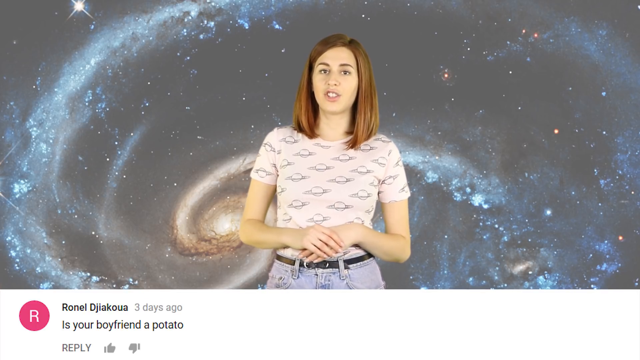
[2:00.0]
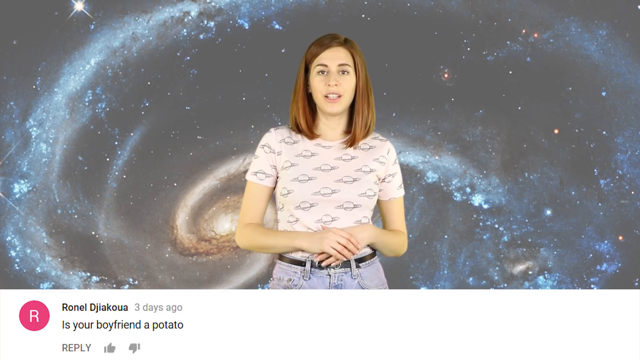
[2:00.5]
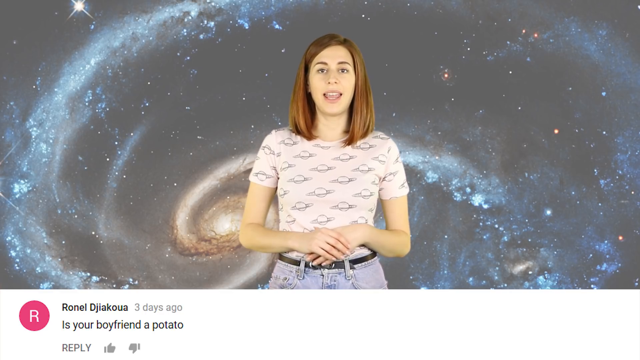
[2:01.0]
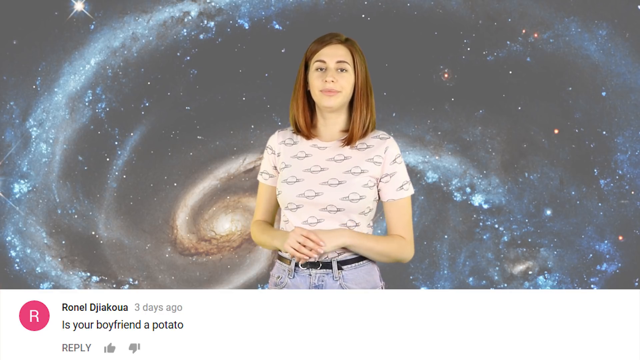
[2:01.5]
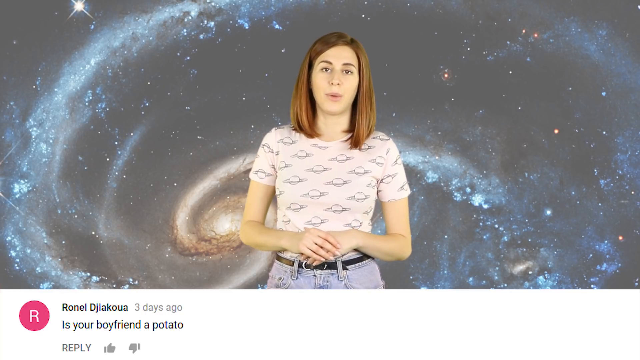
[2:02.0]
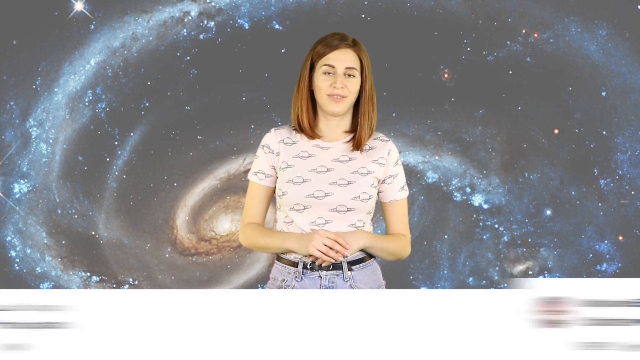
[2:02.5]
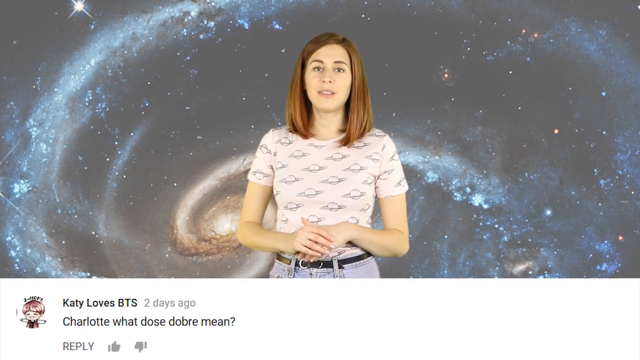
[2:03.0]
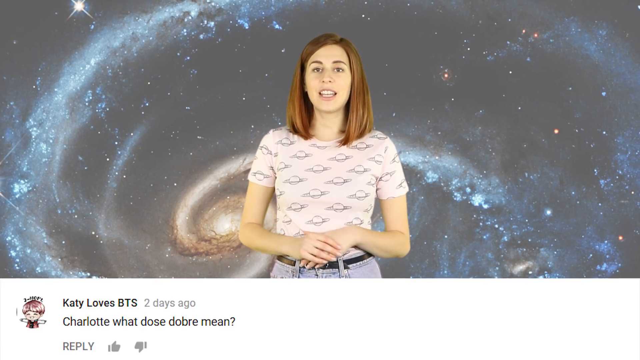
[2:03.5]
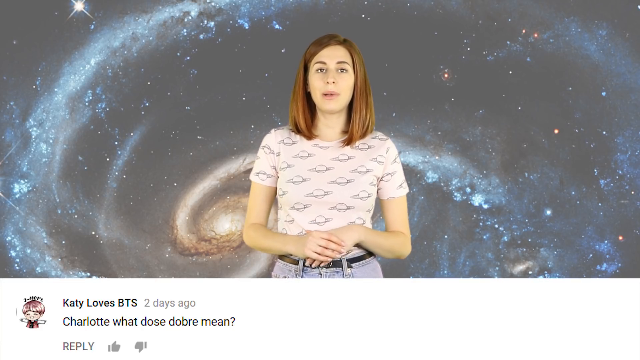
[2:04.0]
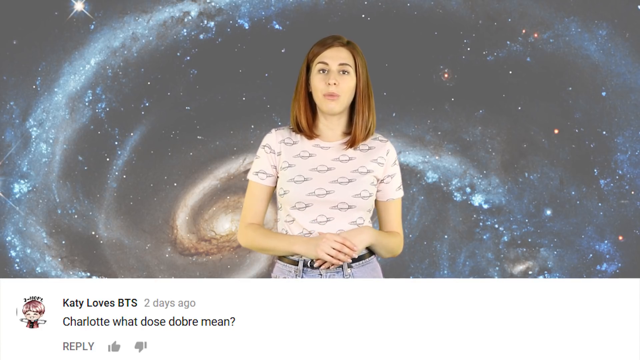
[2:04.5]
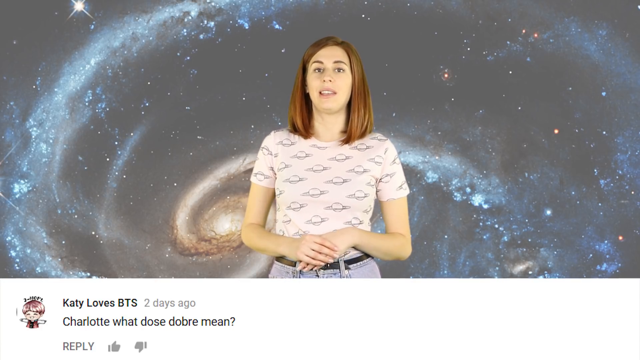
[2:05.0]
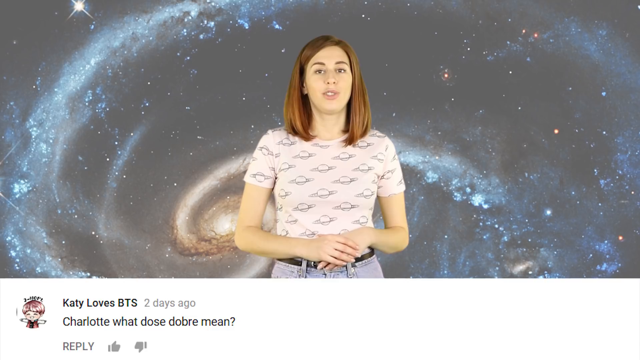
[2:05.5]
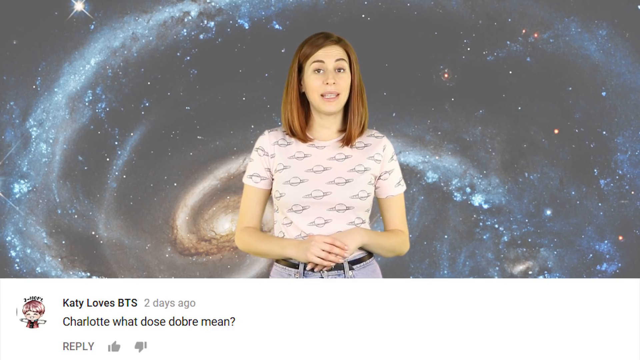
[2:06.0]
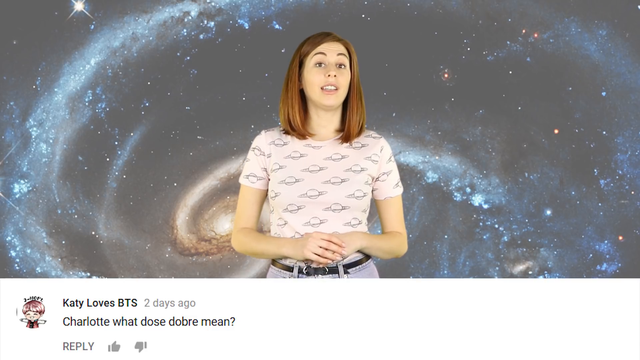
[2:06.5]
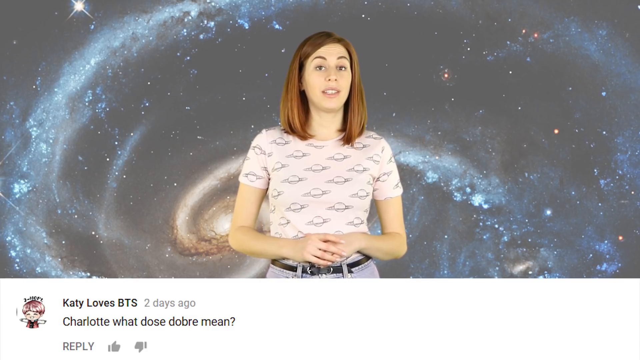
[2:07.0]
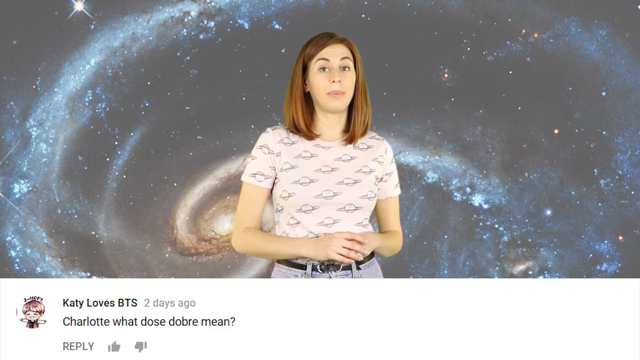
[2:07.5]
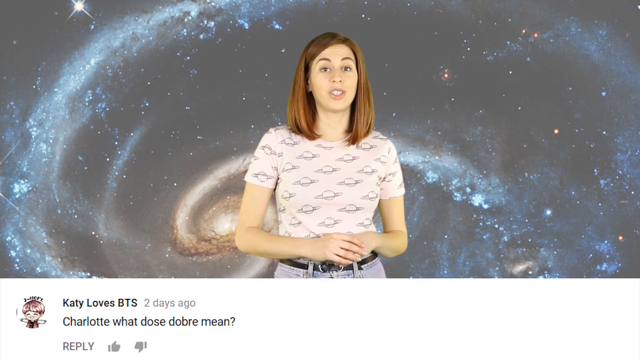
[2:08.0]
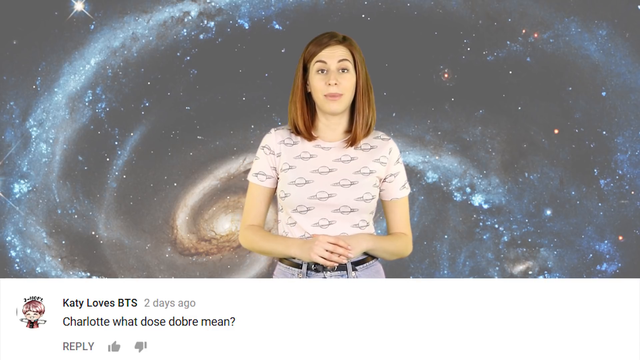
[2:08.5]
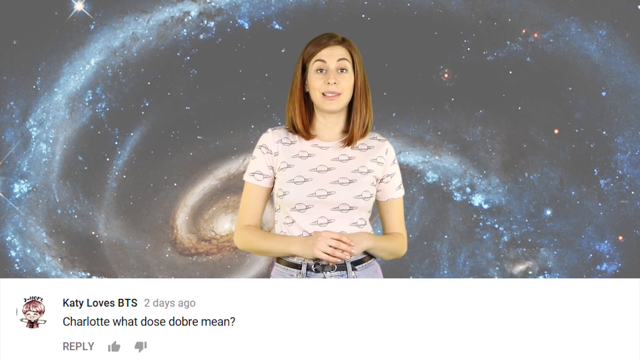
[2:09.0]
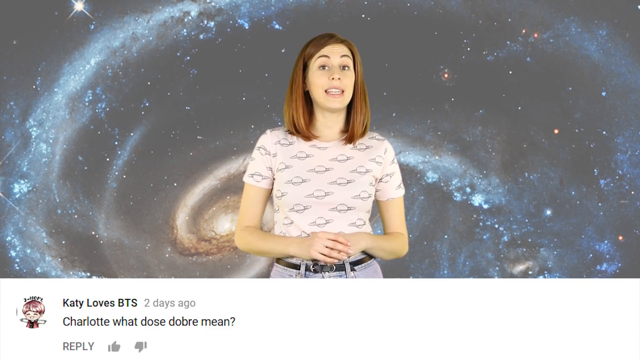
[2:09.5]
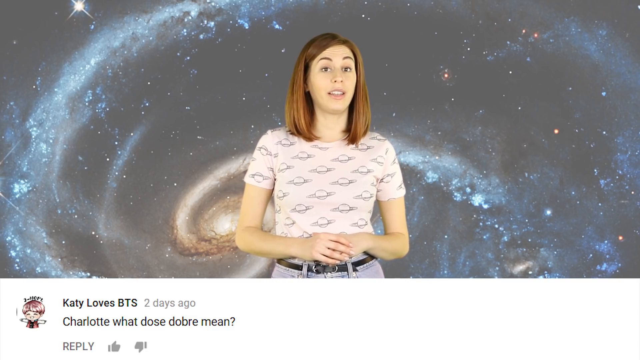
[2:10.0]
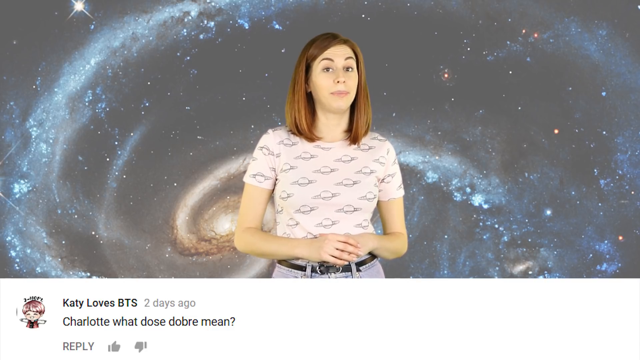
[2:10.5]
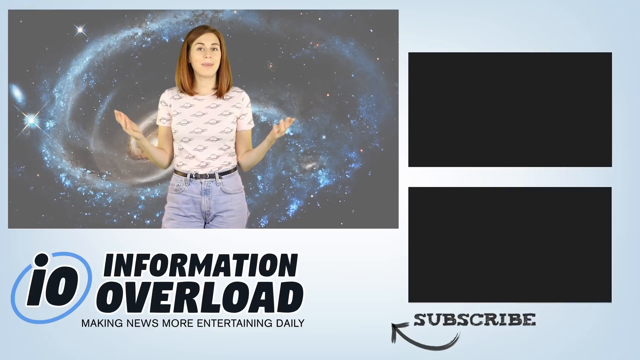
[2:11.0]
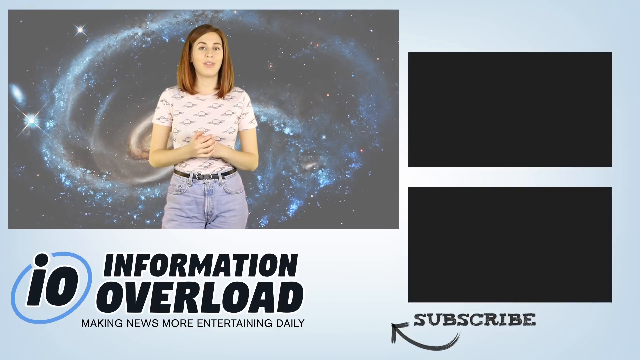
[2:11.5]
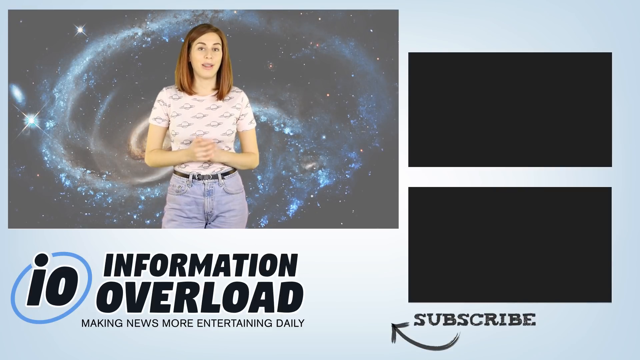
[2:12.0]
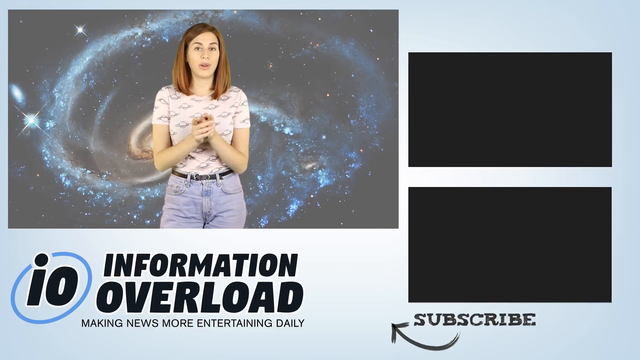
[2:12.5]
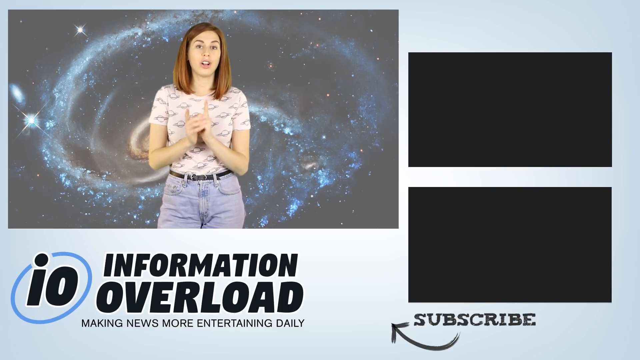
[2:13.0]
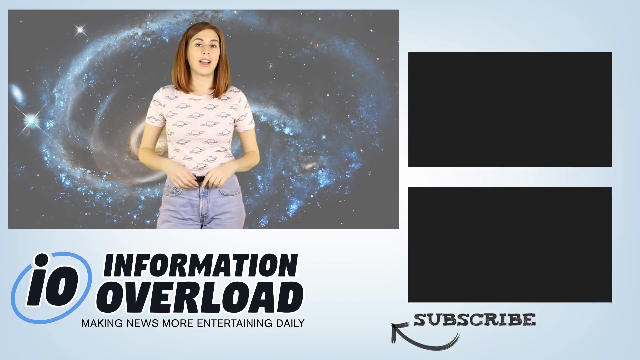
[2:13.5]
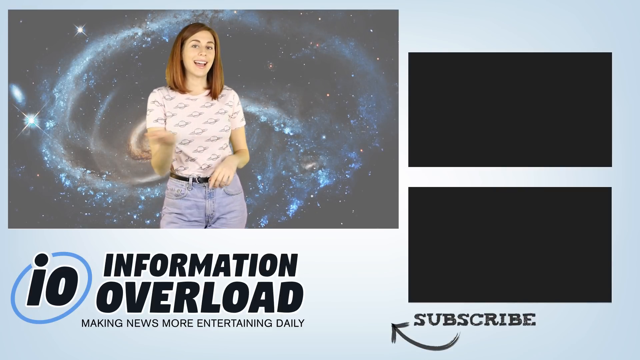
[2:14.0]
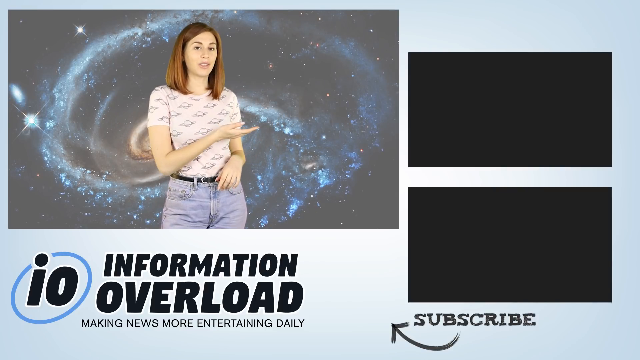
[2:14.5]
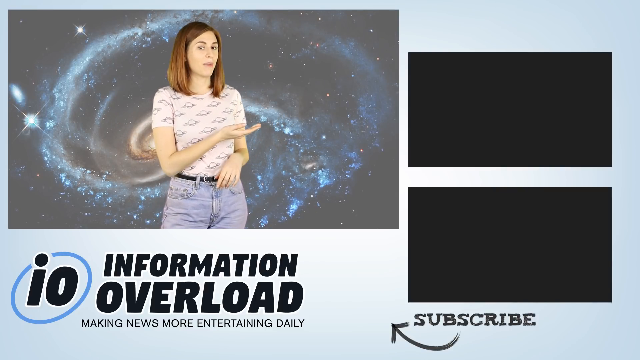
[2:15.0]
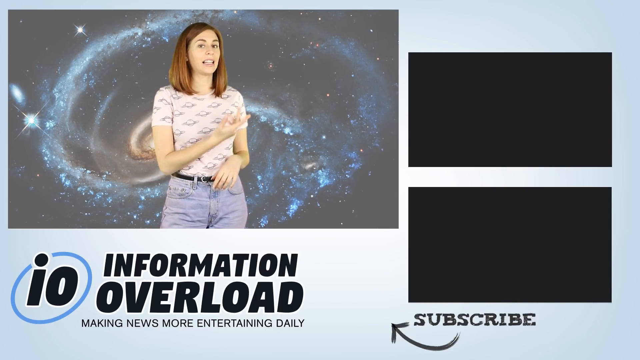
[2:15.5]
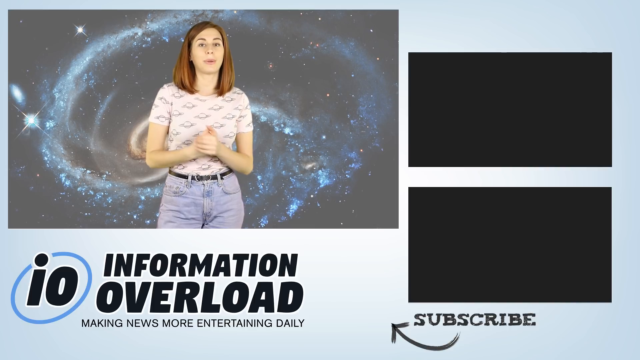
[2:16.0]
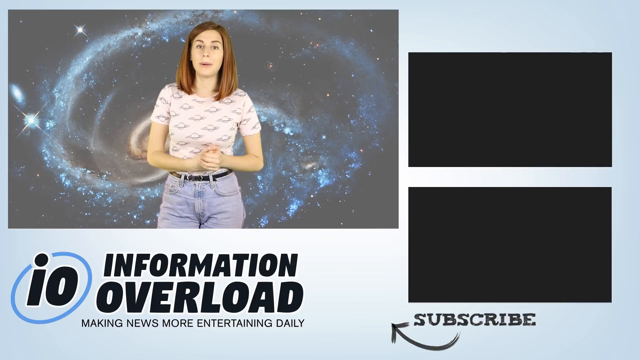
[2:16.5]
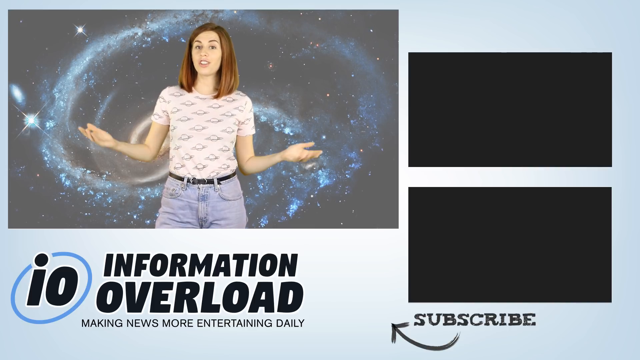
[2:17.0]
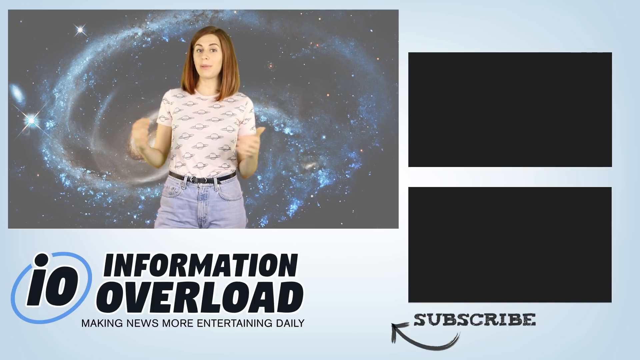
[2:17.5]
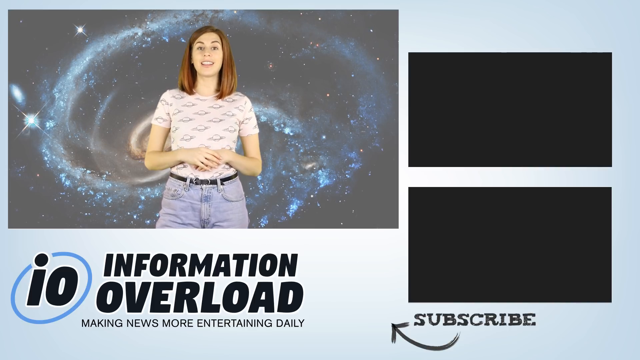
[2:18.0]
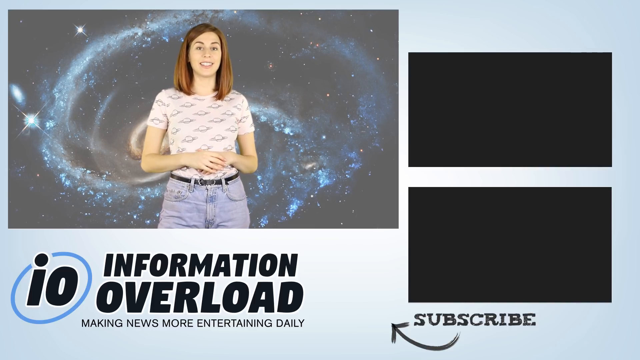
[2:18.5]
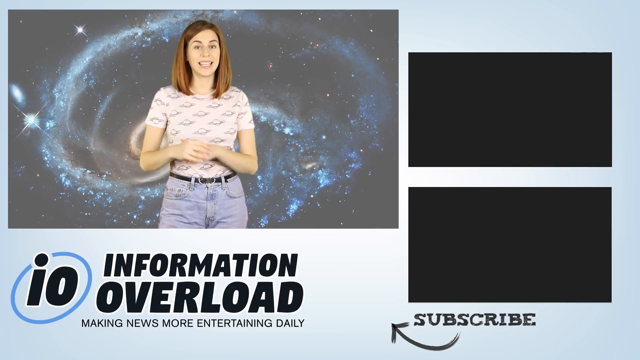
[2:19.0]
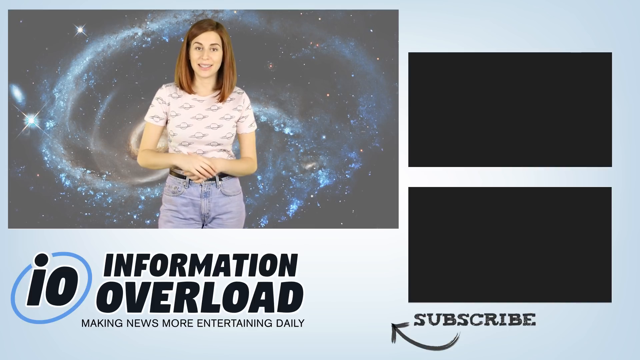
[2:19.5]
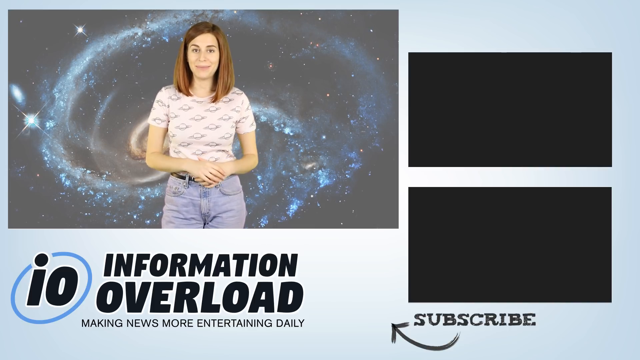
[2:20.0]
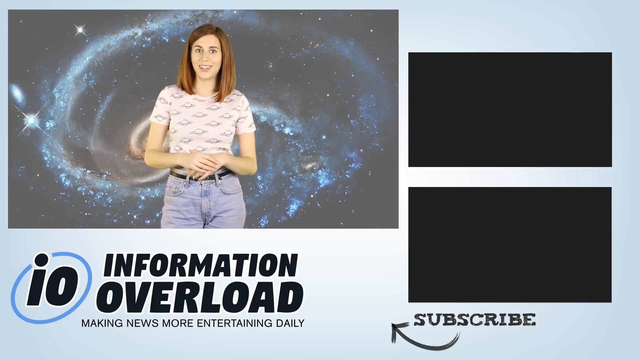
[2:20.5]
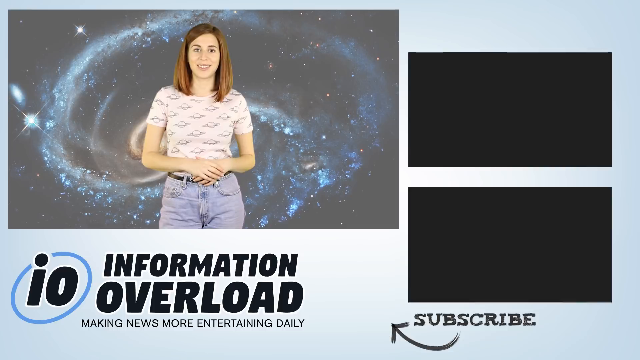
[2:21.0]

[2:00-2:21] The woman talks with her hands together as a third post appears at the bottom: "Charlotte, what dose dobre mean?", posted two days ago. The comments are directed at the woman talking in the middle. The spiral galaxy picture remains in the background. Then the frame showing the woman shrinks to the upper left side as she continues to talk. At the bottom left are the words "information overload, making news more entertaining daily". On the right side are two blank black rectangle shapes with the word "subscribe" underneath them. The woman points over to the right side, toward these black rectangles.